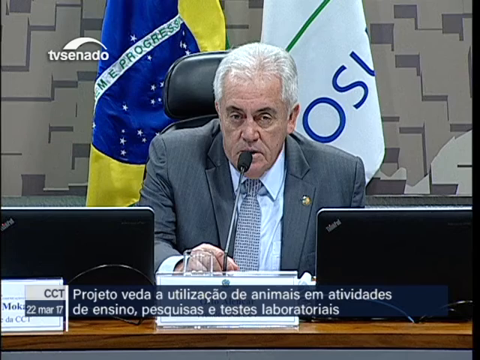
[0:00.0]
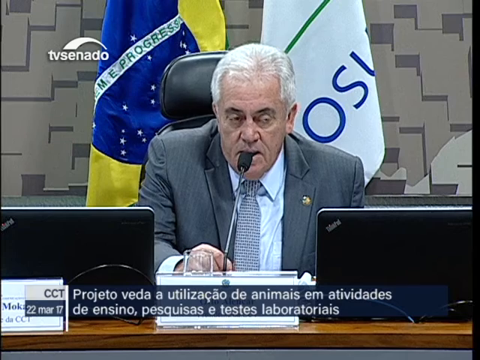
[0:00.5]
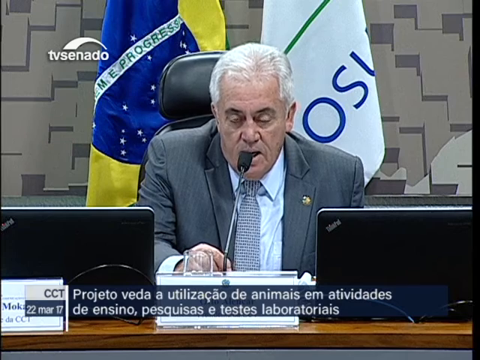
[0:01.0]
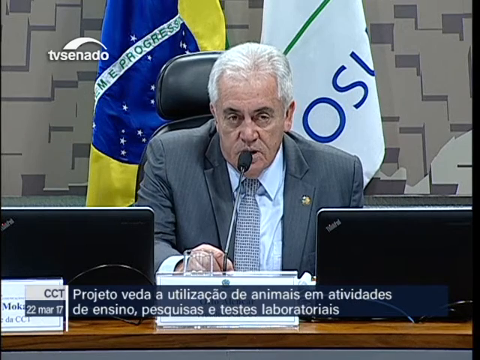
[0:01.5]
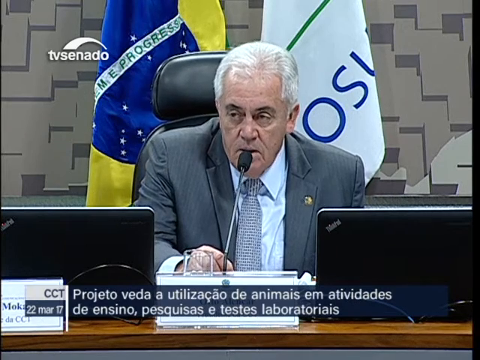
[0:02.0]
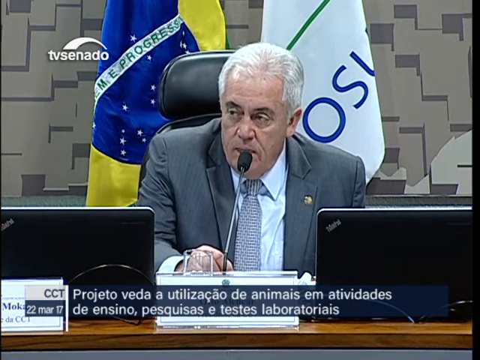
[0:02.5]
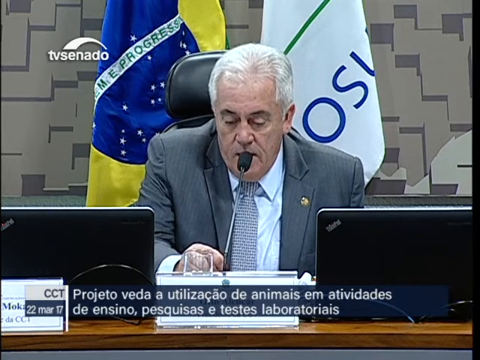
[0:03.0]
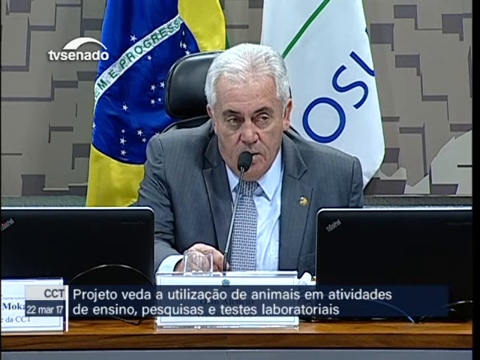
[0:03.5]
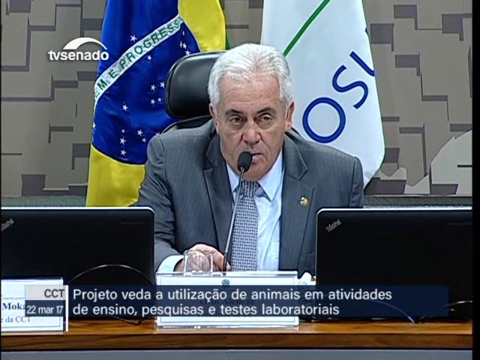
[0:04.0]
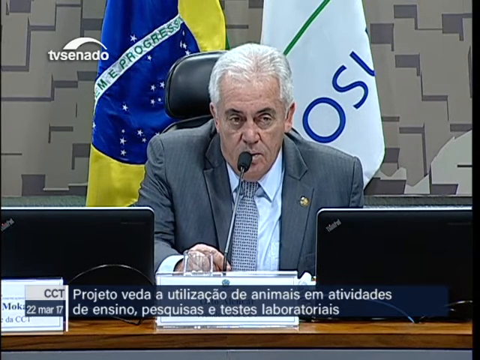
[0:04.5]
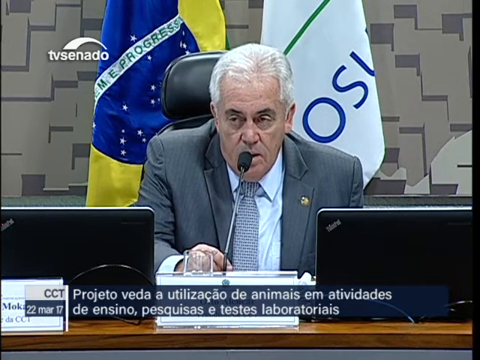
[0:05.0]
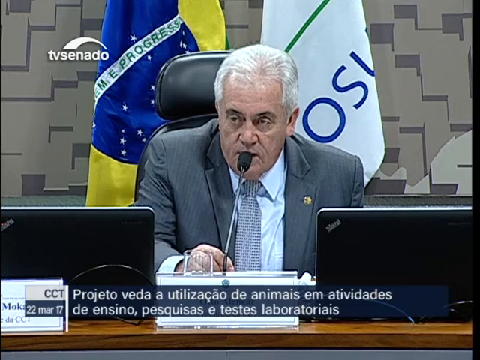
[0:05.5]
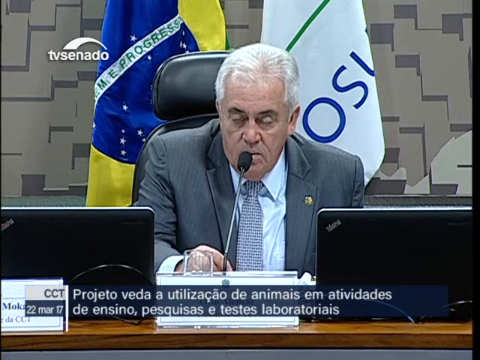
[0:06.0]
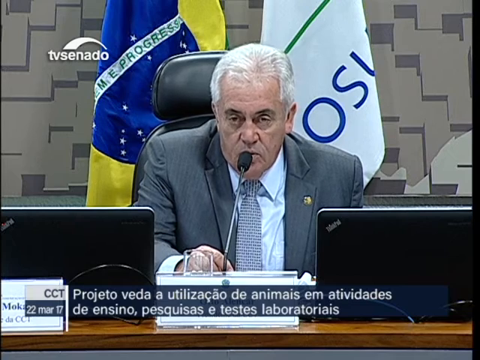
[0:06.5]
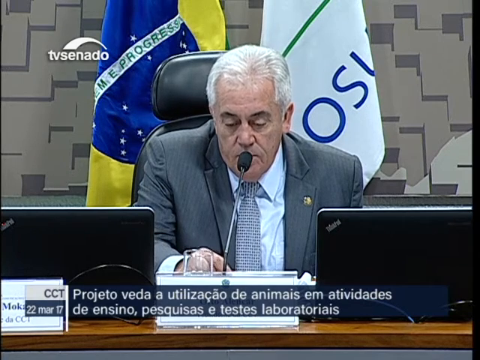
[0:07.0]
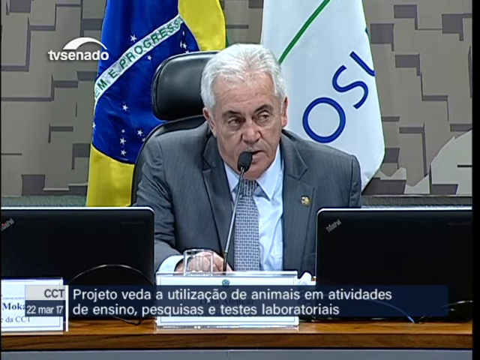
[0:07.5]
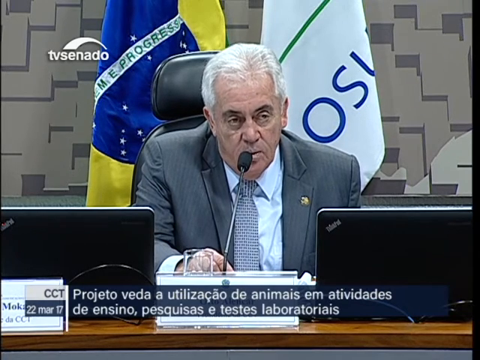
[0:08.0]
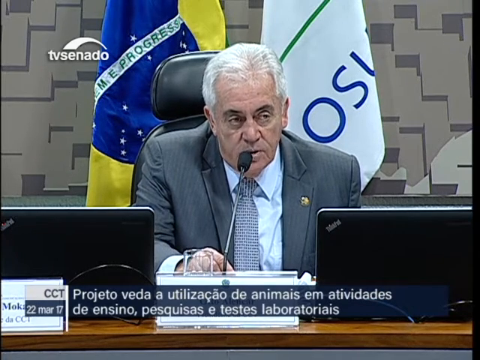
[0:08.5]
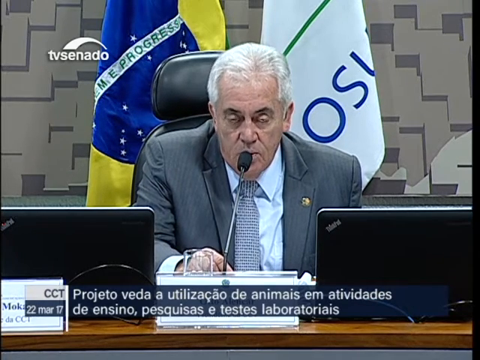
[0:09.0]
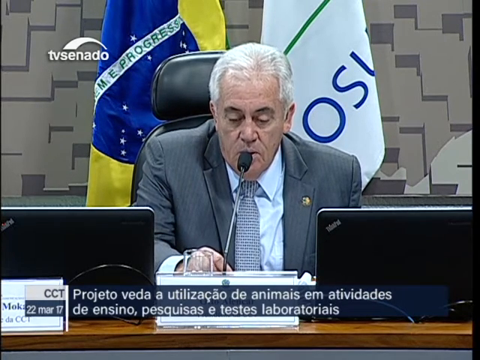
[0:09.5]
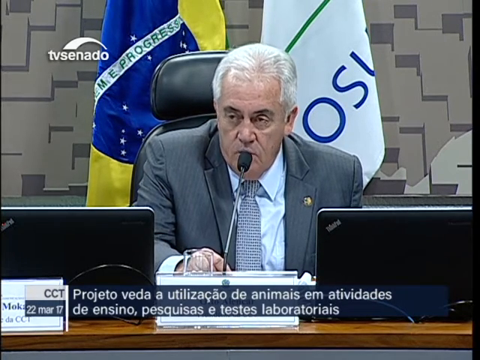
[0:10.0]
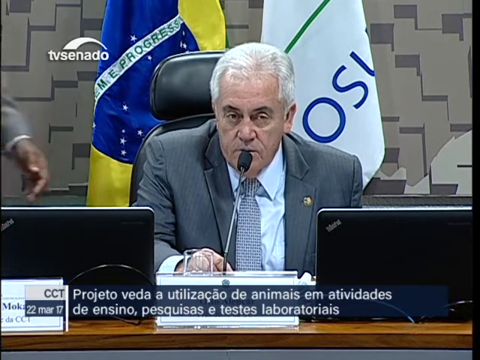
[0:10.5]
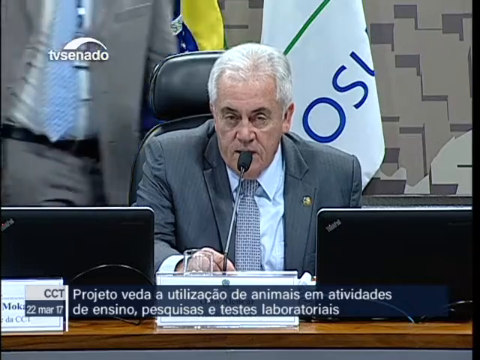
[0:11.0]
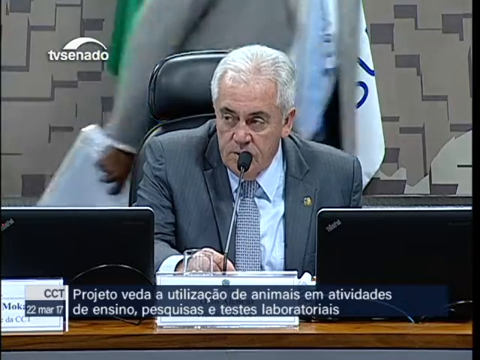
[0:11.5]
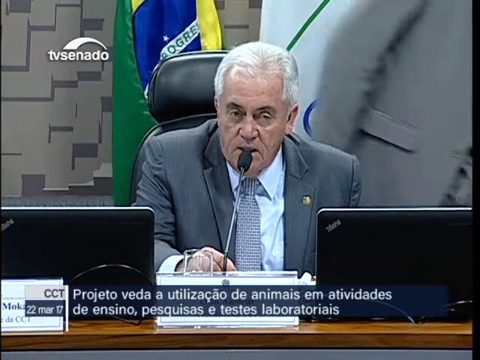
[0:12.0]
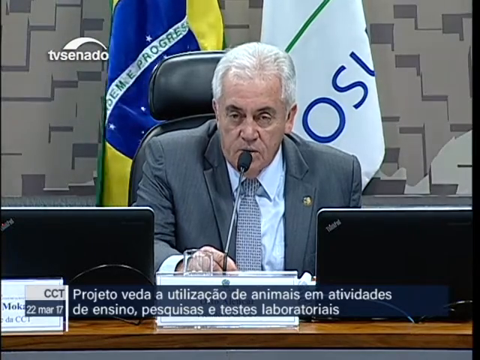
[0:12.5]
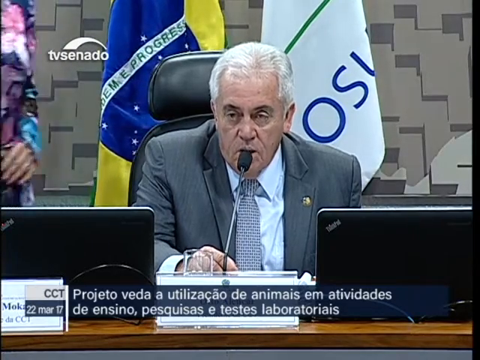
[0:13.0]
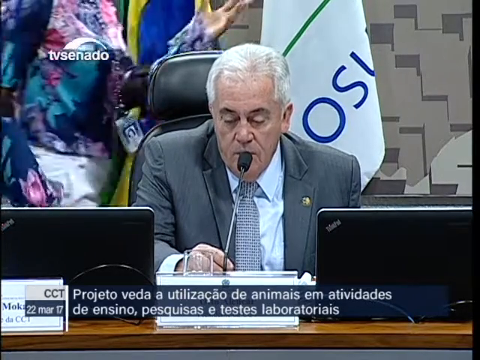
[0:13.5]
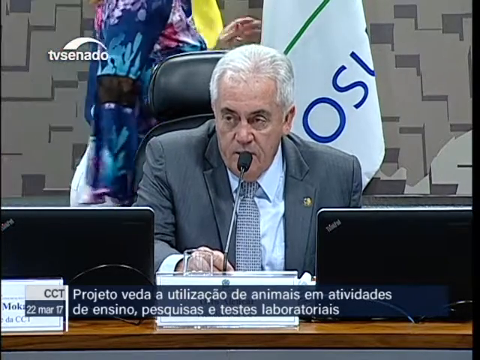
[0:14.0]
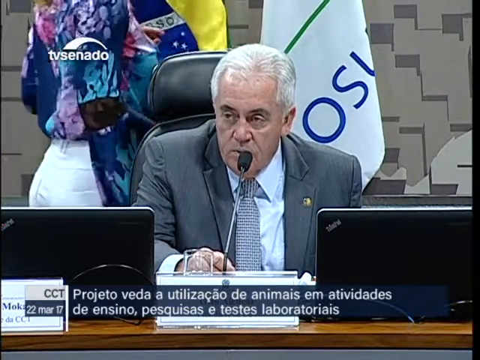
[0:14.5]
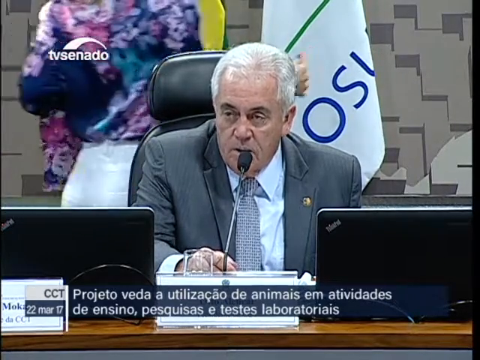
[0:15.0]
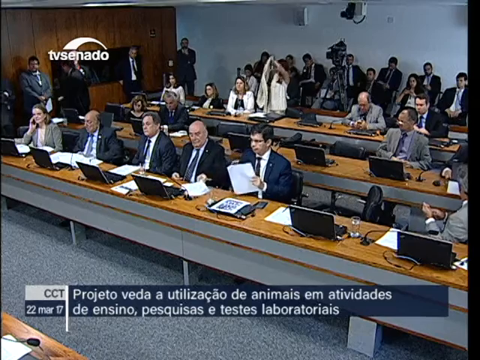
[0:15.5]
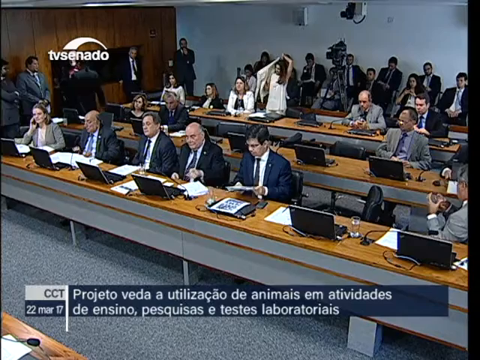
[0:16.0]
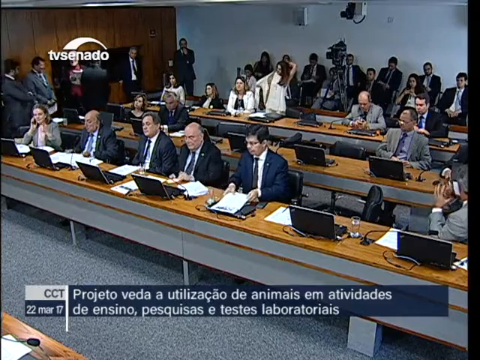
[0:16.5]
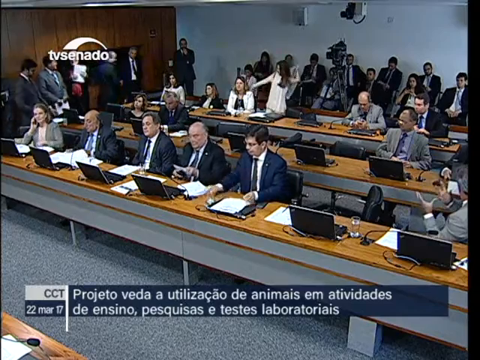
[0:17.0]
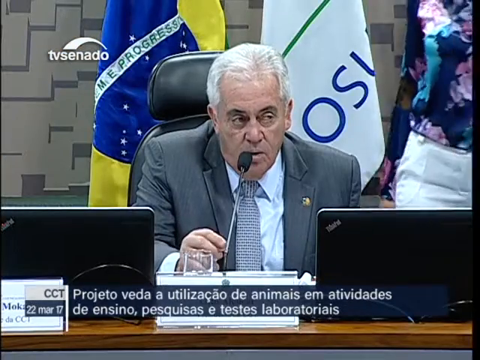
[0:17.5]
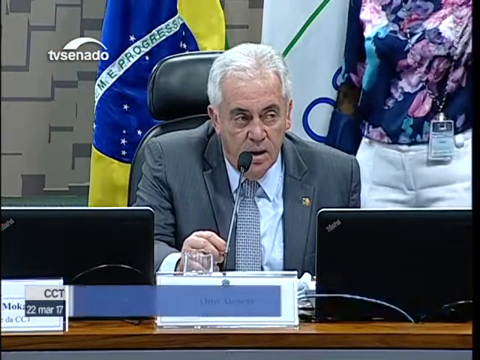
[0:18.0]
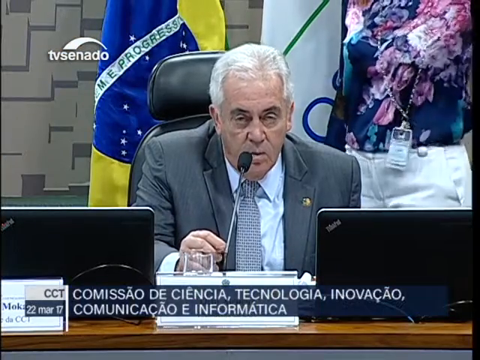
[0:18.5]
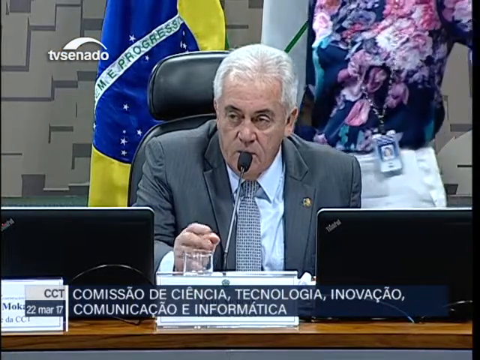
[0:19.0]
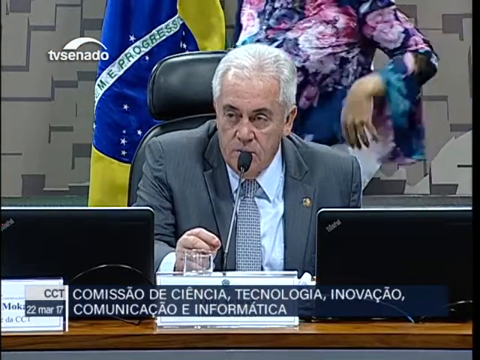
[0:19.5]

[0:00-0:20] A man sits at a desk with a microphone in front of him. He looks up as he speaks, moving his eyes around as if there is a crowd in front of him. Behind him is a Brazilian flag, and to the right of it another flag, which is white with some blue text on it. There is a gray background behind the flags. On the desk in front of the man are the microphone and two laptops, one to his left and one to his right. A man in a suit walks by him very fast, and a woman in a bright pink, blue and dark blue shirt also walks by him. The camera shot then moves to show a line of desks with multiple people in a row, all with laptops and in professional clothing; this seems to be in front of the man who is talking. The shot cuts back to him as he continues to speak, while a bunch of text shows at the bottom and the woman in the colorful shirt walks by him again.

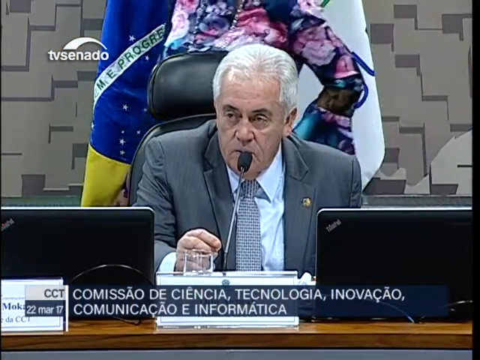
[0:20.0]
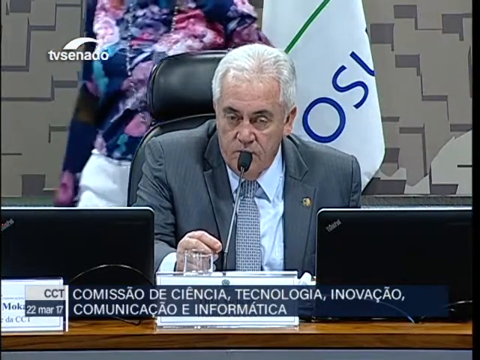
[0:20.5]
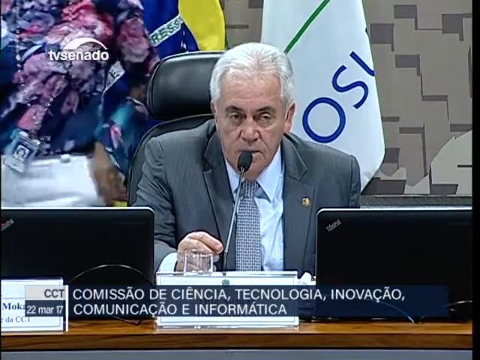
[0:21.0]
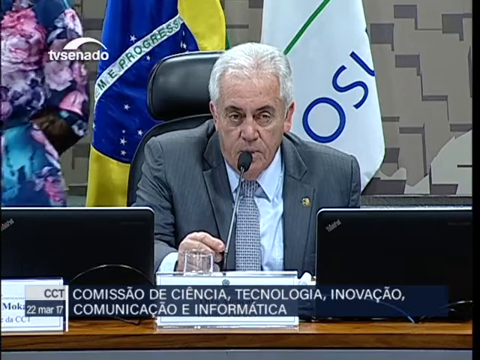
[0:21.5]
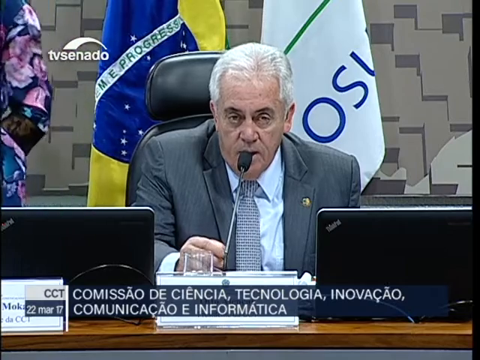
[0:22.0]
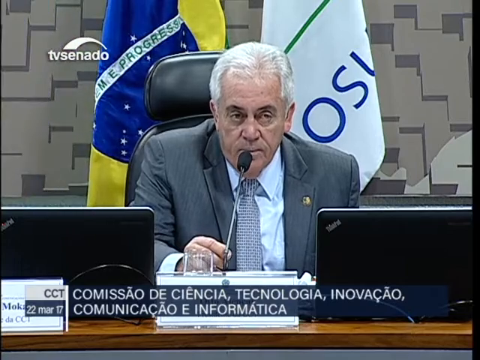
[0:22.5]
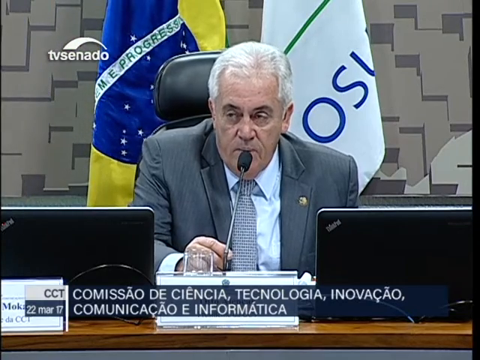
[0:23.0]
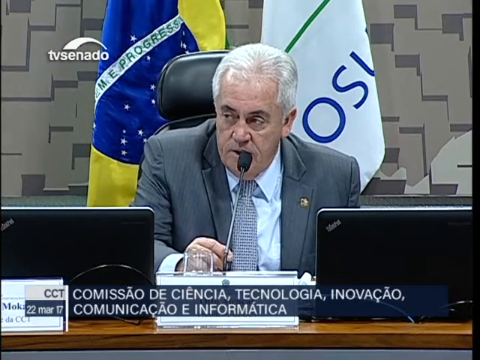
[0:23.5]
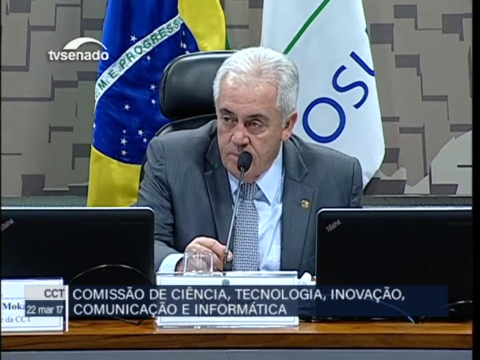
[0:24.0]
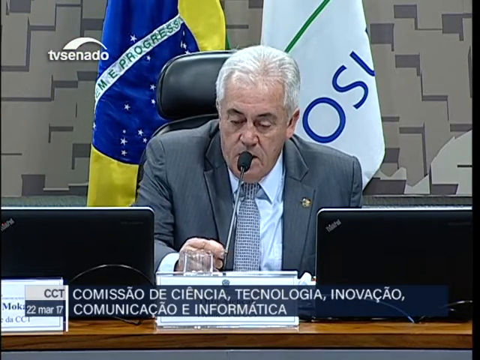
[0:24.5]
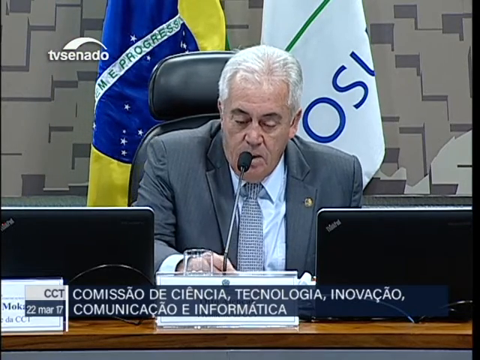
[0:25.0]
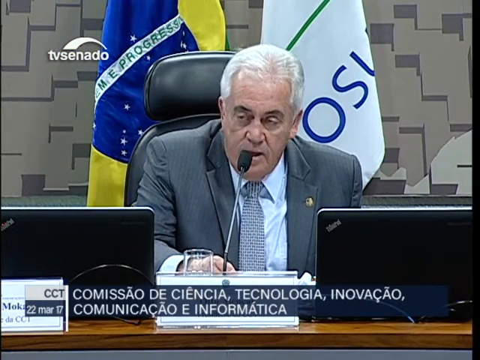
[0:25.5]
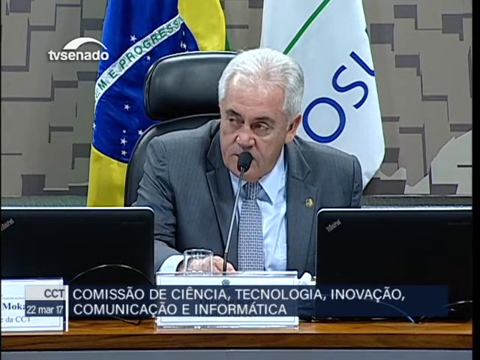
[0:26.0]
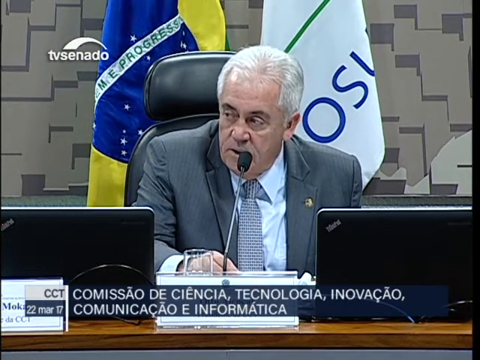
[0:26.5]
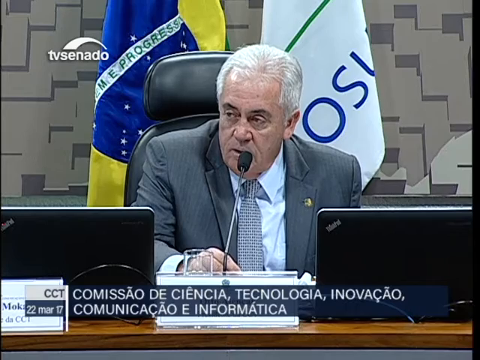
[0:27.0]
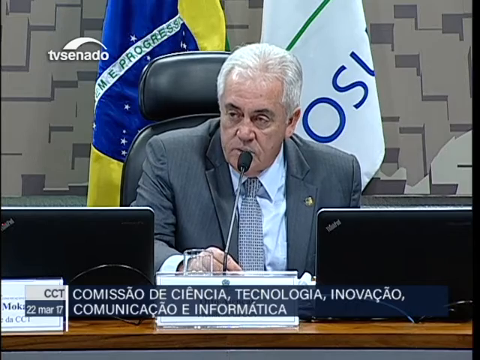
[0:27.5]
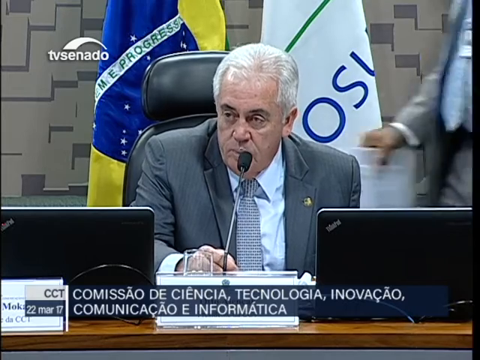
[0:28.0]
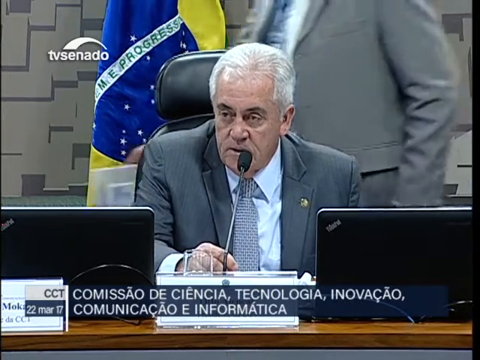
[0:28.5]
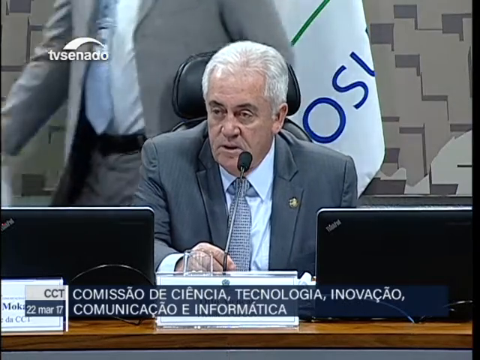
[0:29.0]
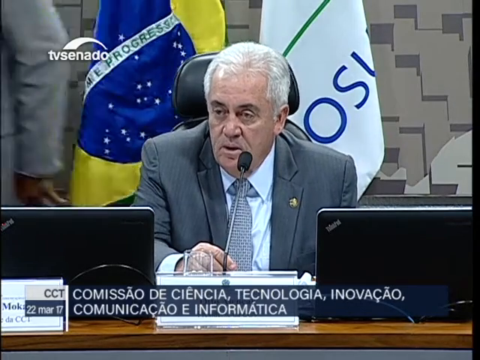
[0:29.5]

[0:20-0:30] The man continues to speak as the woman finishes walking by. Her head is cut off by the top of the frame, and she walks off frame. The gray-haired man at the microphone keeps speaking into it, looking around the room without much movement; only his eyes and head move slightly as he speaks. The man in the gray suit with a white undershirt and blue tie walks behind him again, in the other direction, holding a few pieces of paper in his right hand. As he walks by, he bumps the Brazilian flag behind the speaker, and the flag moves slightly while the man continues to speak.